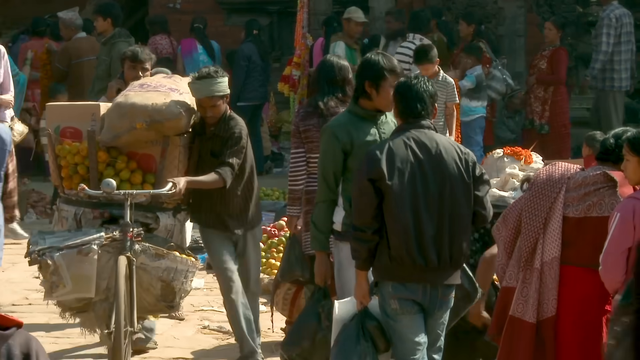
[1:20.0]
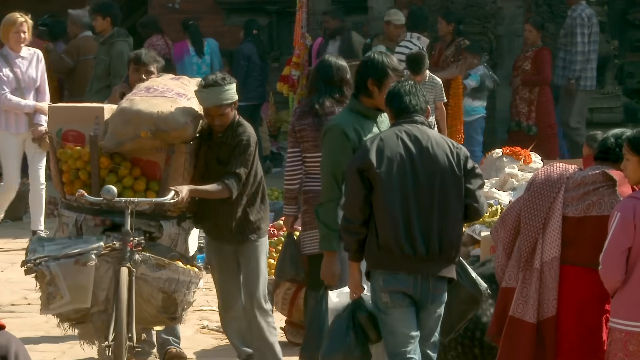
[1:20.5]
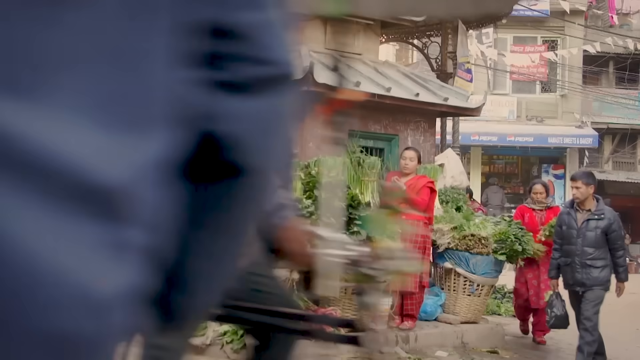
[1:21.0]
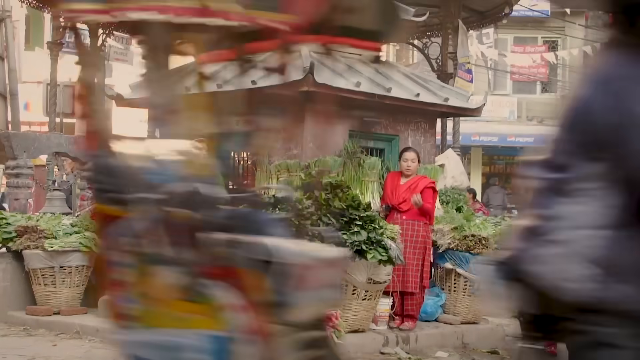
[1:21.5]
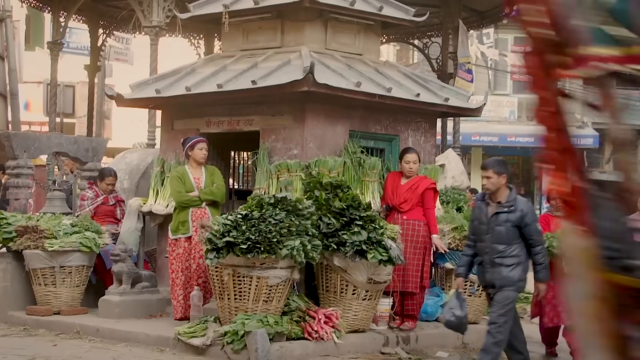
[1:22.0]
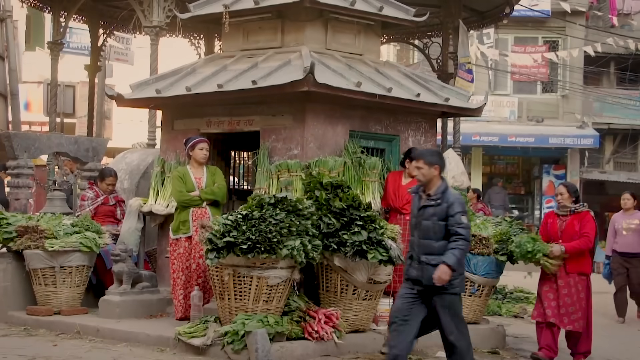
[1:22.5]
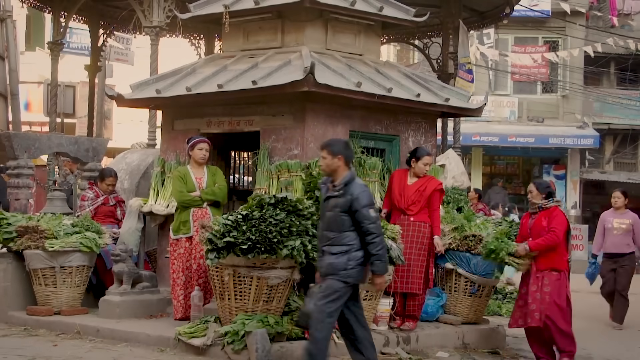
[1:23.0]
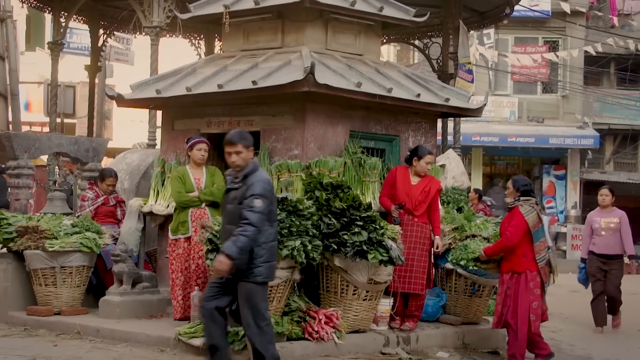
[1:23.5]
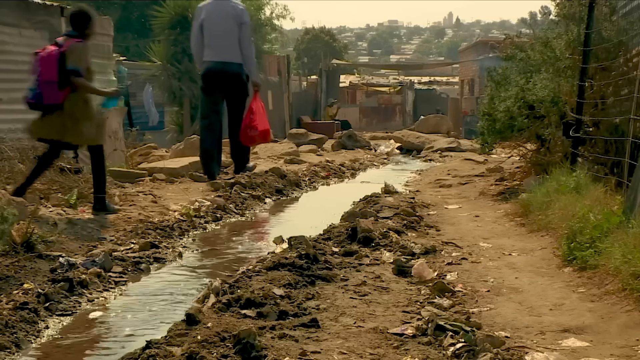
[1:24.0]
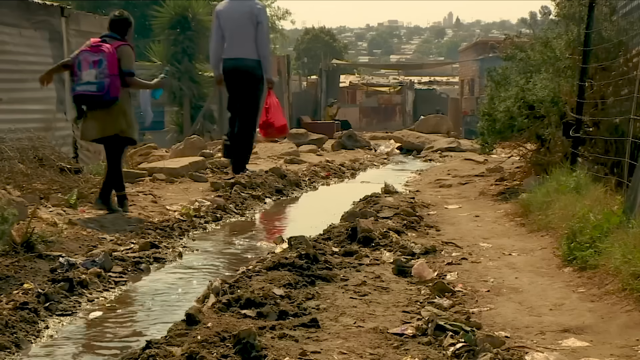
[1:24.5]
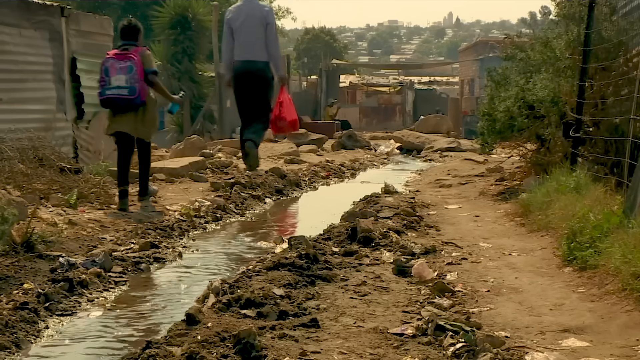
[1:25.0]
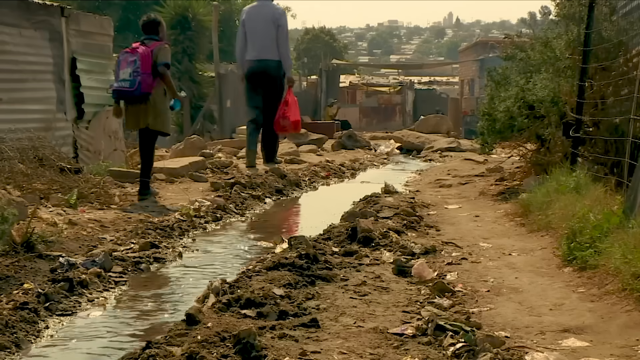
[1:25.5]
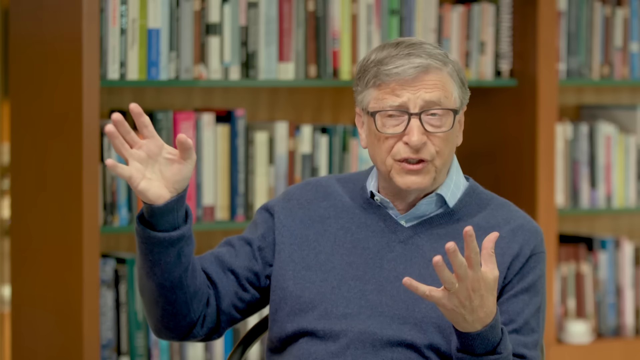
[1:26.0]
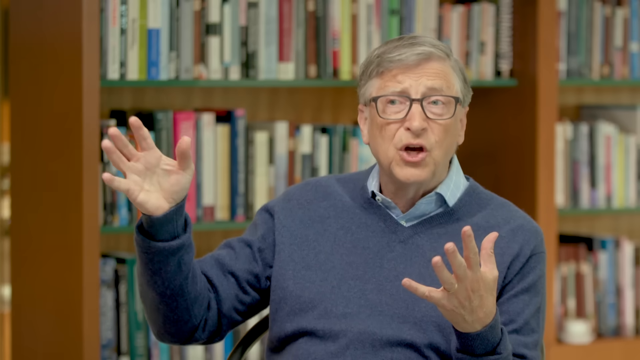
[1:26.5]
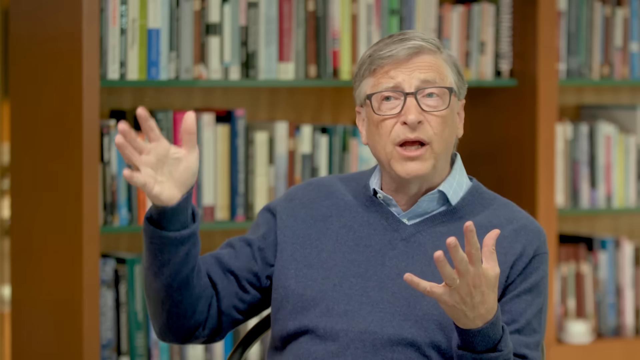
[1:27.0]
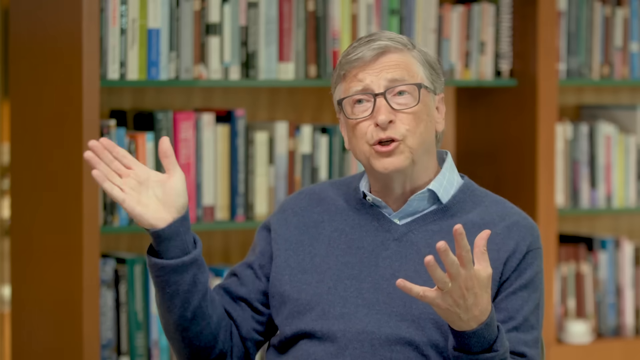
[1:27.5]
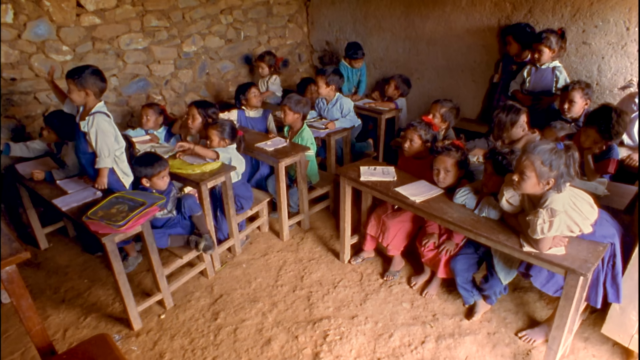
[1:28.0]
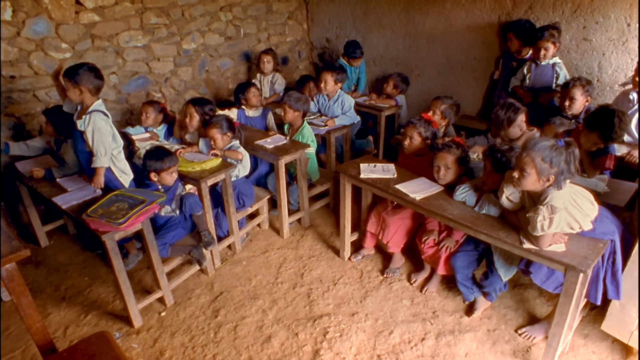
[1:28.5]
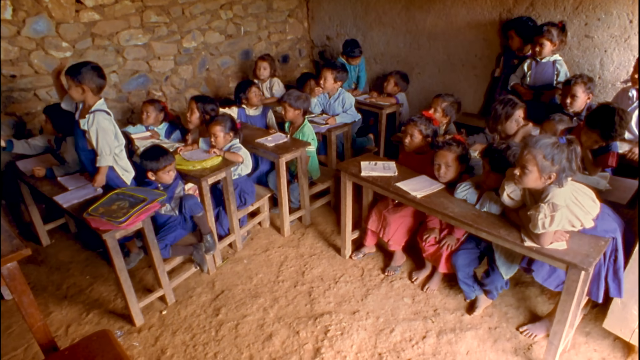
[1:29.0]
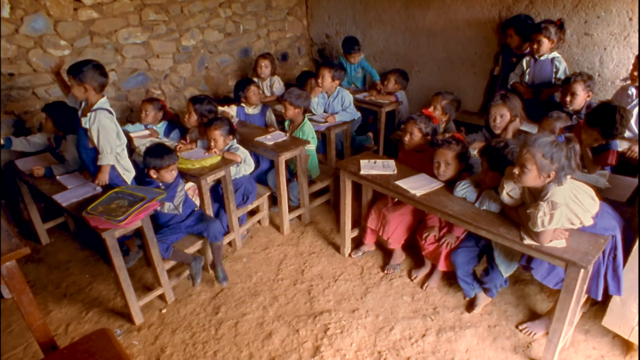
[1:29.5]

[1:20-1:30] Outside, a man pushes a bike through the streets. The bike has something attached to it, and he carries a lot of produce on it, such as fruit and a large sack of something. The scene changes to another outdoor area where women stand selling leafy green vegetables piled up in large wicker-style baskets. Next, a man and a young girl walk down a street that looks like a dirt street with a small muddy river running along its centre; the surrounding area looks dilapidated. The video pans to a white man presenting. Then footage from inside a classroom shows little children sitting at small desks; the floor is made of dirt and clay, and it does not look like a modern classroom.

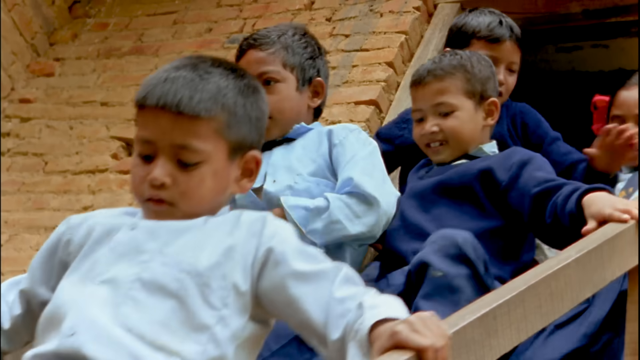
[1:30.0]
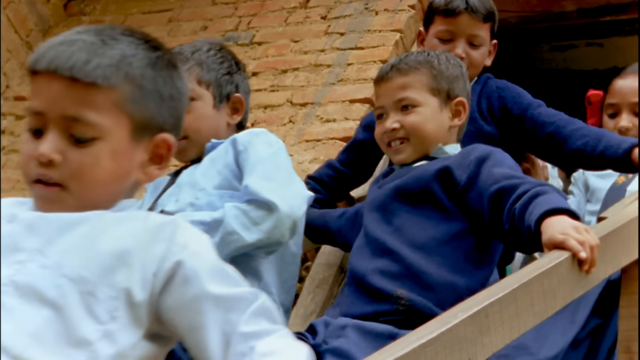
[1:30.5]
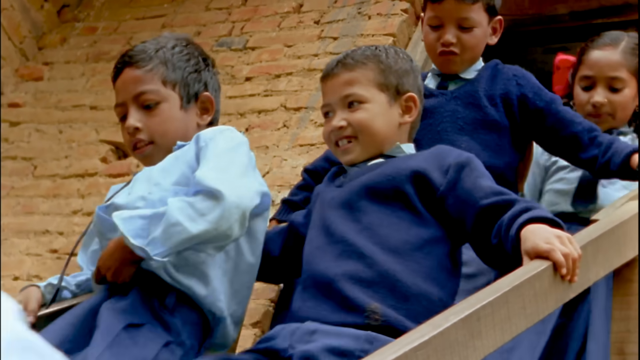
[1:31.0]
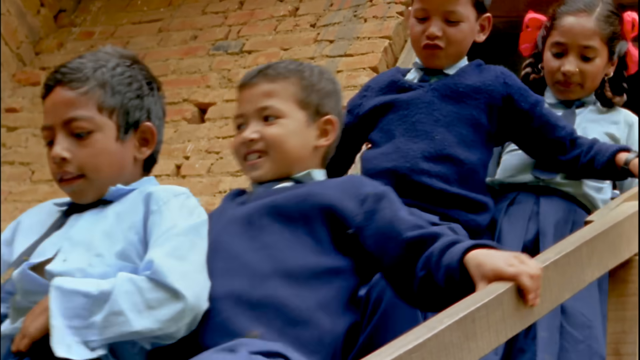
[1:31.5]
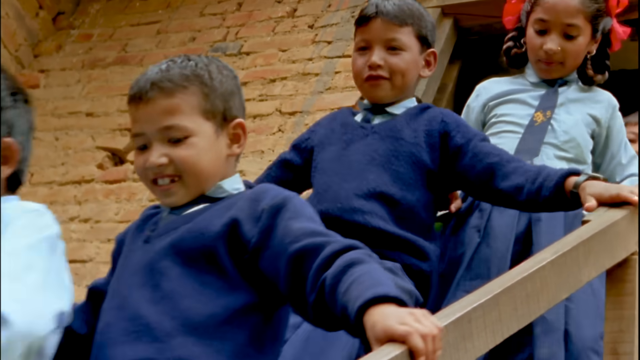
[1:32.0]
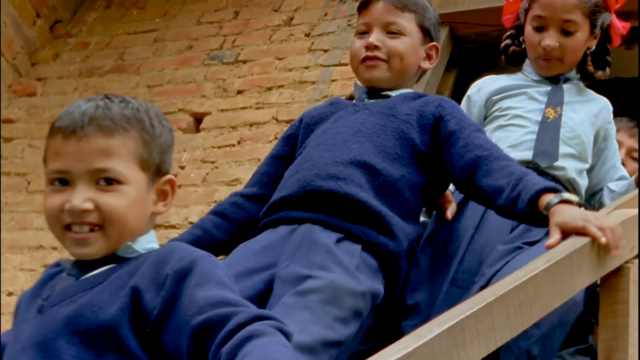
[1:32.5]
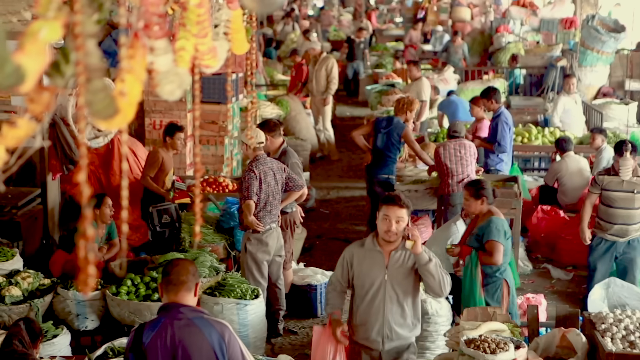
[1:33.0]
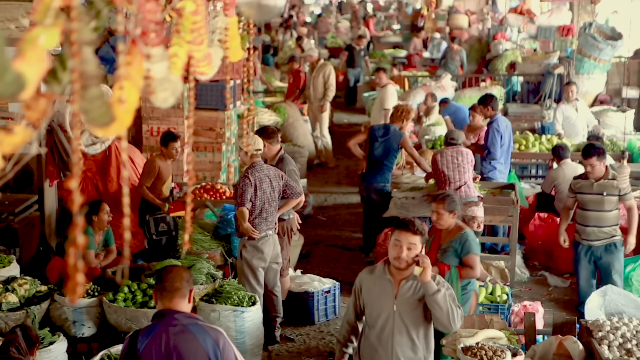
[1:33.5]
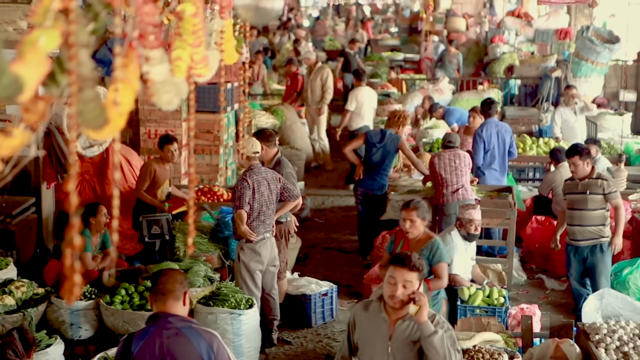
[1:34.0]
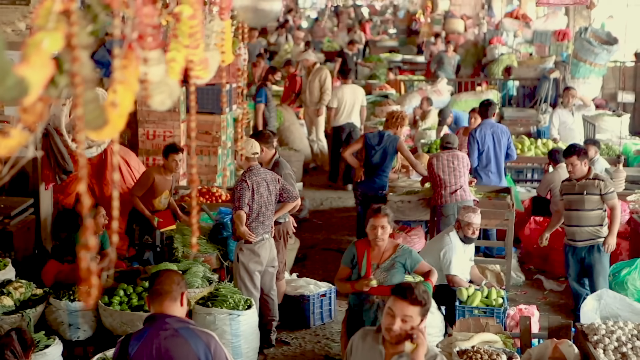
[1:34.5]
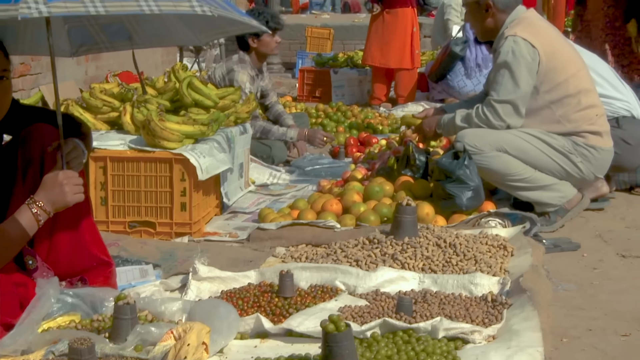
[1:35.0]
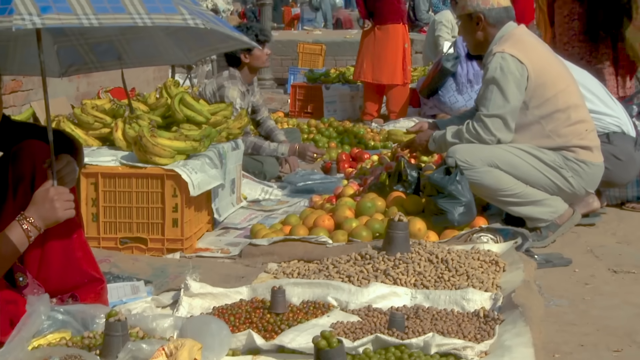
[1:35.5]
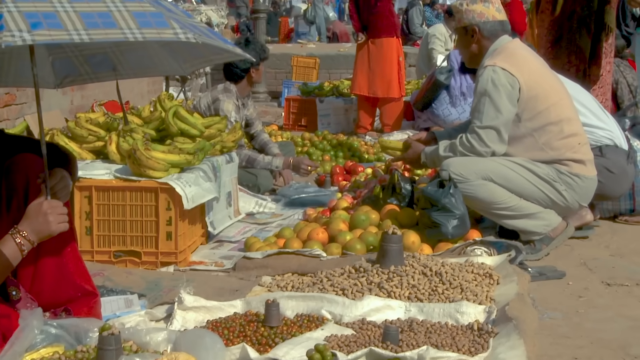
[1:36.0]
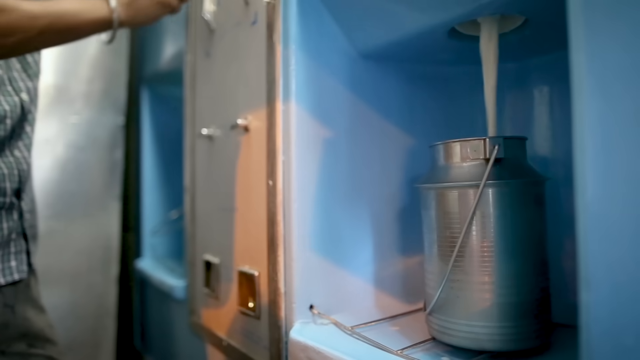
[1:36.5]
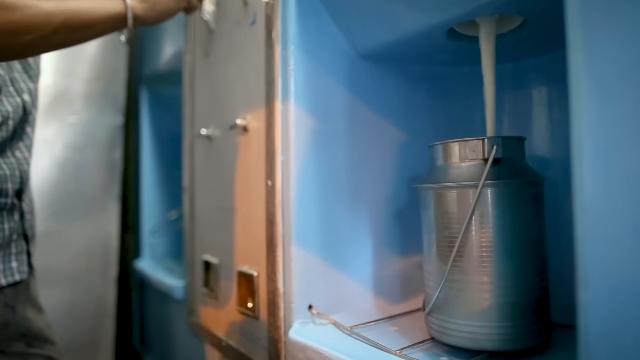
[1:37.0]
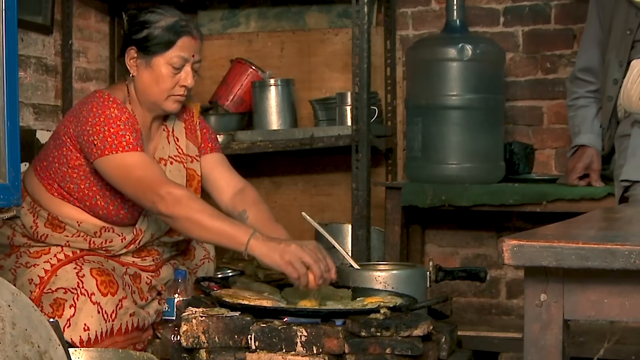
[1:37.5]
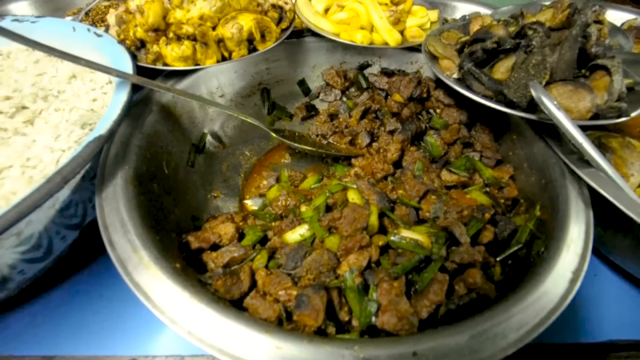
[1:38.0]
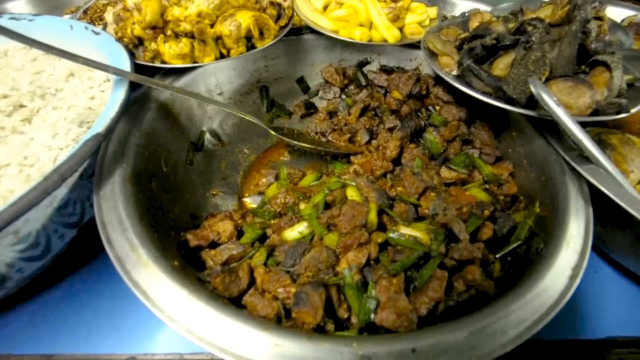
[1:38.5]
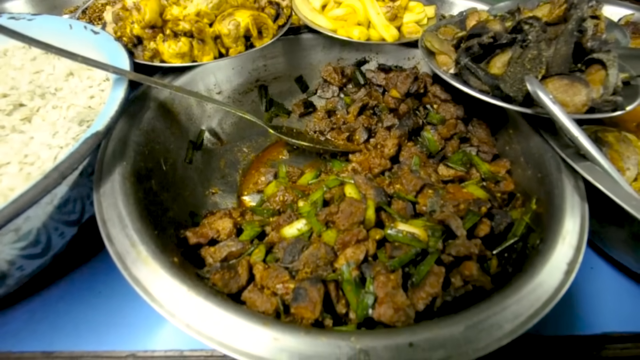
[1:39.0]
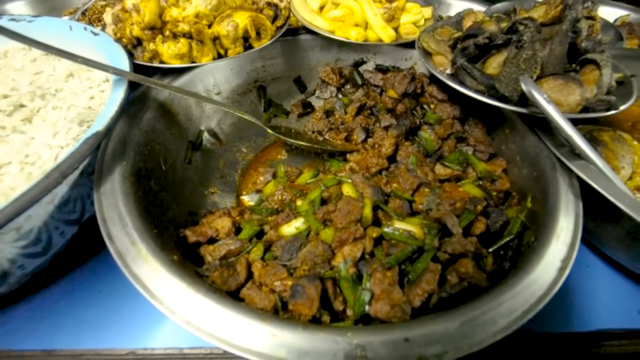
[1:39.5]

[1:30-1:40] A group of young school children who look to be of Asian heritage, wearing a blue uniform and looking around 6 or 7 years old, walk down a set of steps outside. The scene changes to a semi-indoor fresh produce market, where a man on a mobile phone walks down the centre aisle. Next is an outdoor fresh produce market with fruits and nuts for sale; the sellers sit on the floor surrounded by their produce, laid out on boxes and newspapers on the ground. The video pans to milk coming out of a machine, which looks like fresh cow's milk. A woman sits cooking at a stove. The scene then changes to cooked food that looks like a meat dish, maybe a spiced meat and vegetable dish, served in a metal platter.